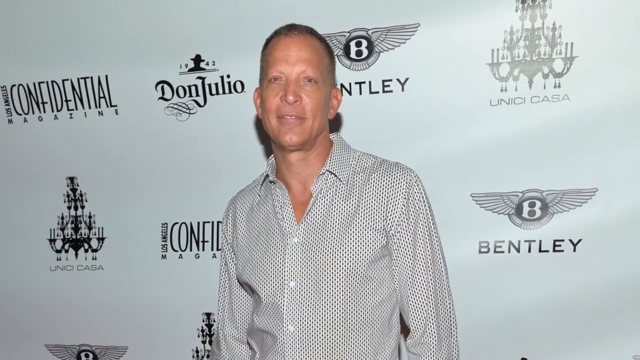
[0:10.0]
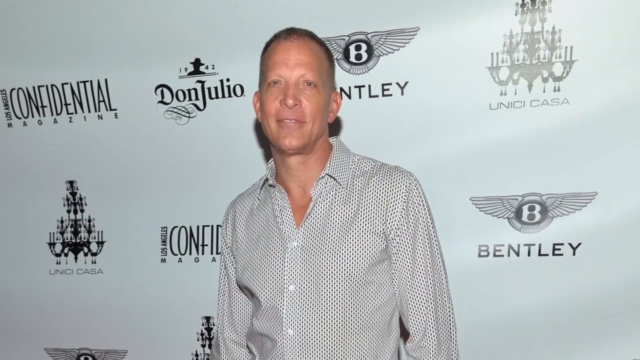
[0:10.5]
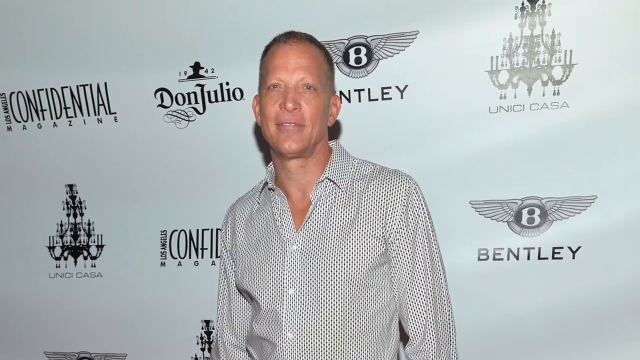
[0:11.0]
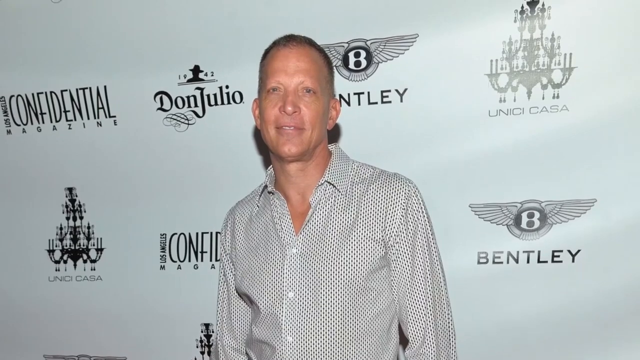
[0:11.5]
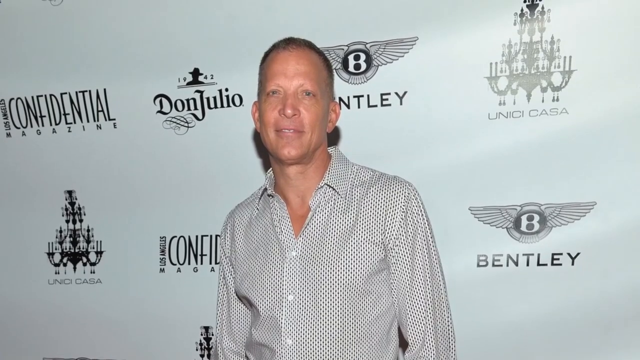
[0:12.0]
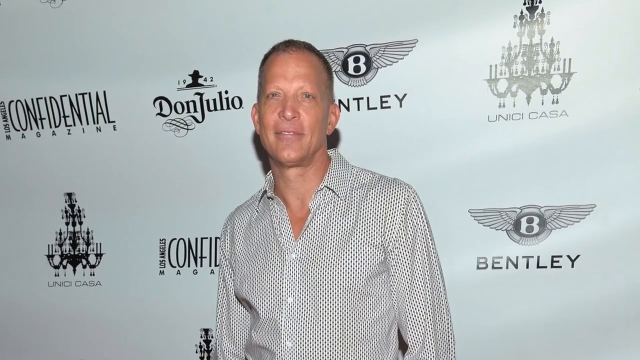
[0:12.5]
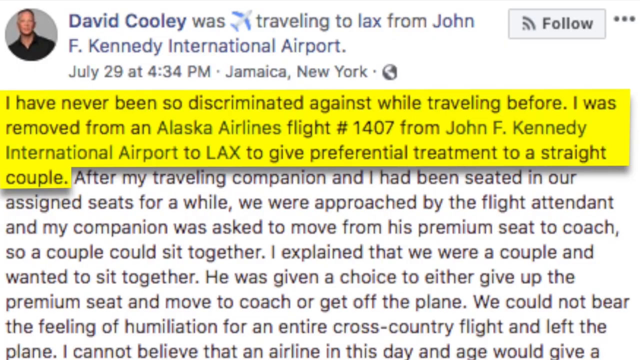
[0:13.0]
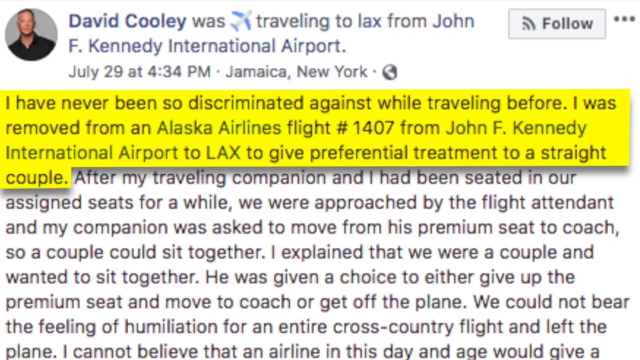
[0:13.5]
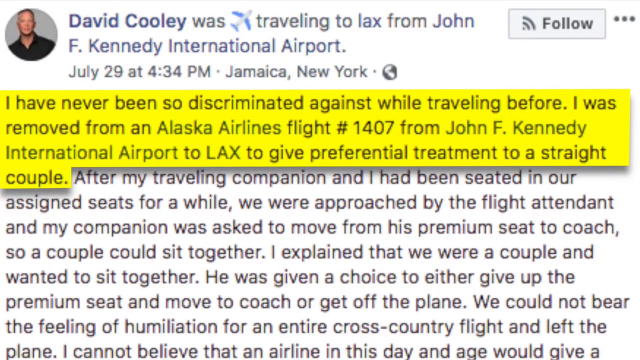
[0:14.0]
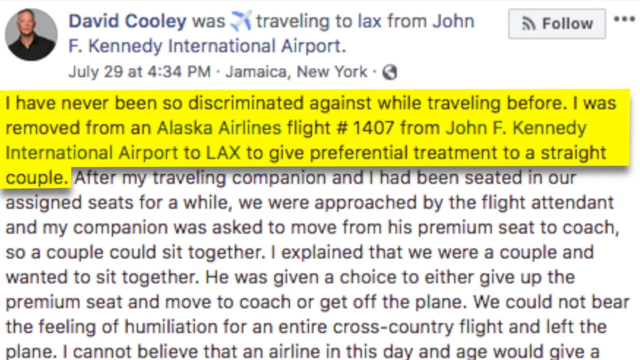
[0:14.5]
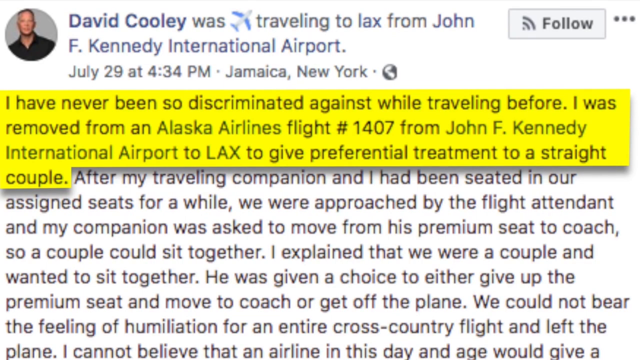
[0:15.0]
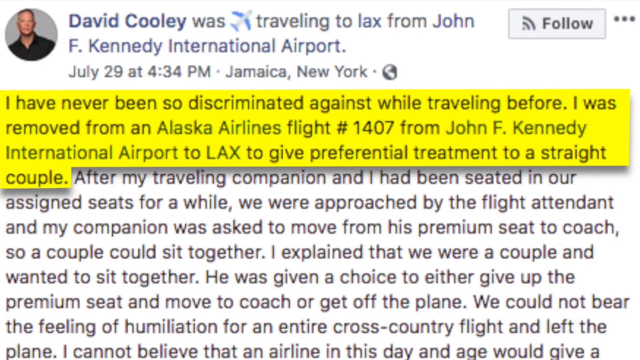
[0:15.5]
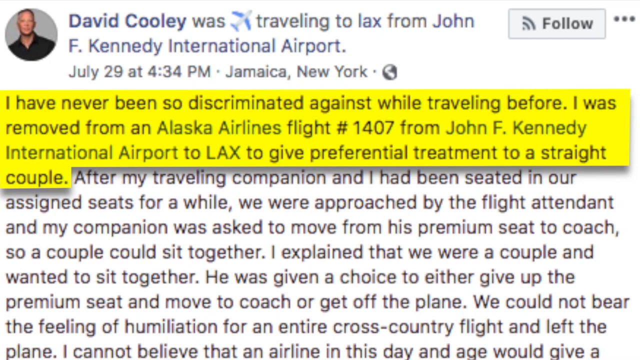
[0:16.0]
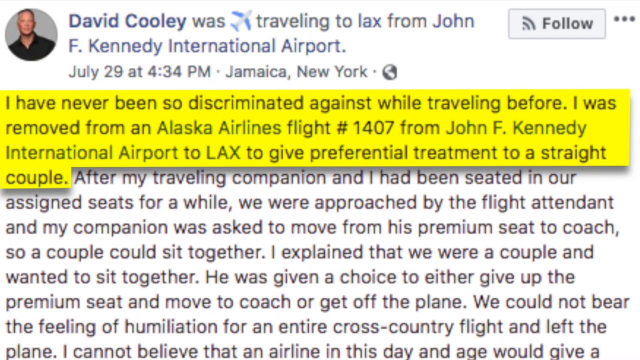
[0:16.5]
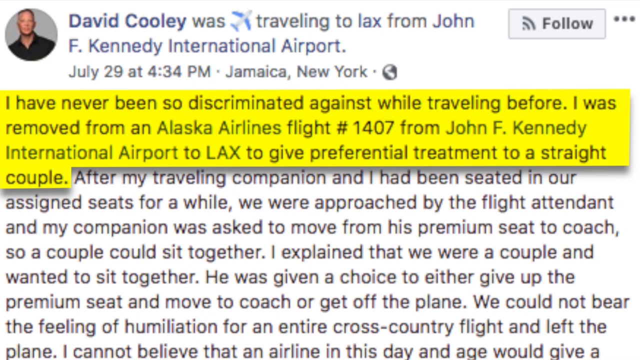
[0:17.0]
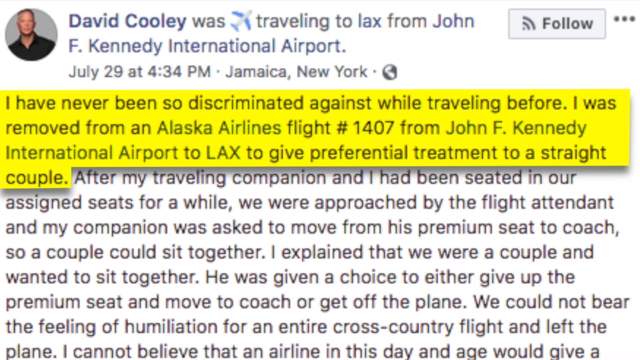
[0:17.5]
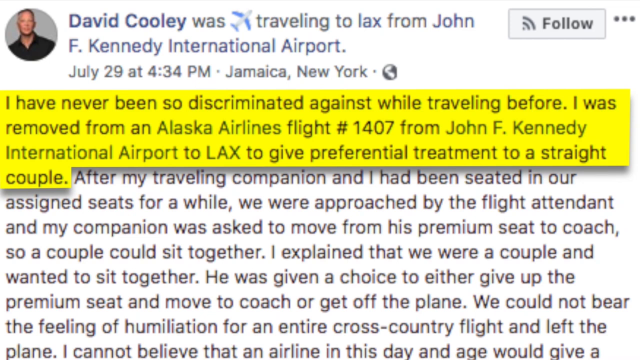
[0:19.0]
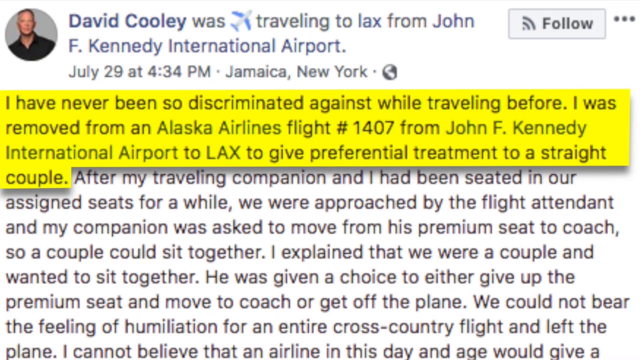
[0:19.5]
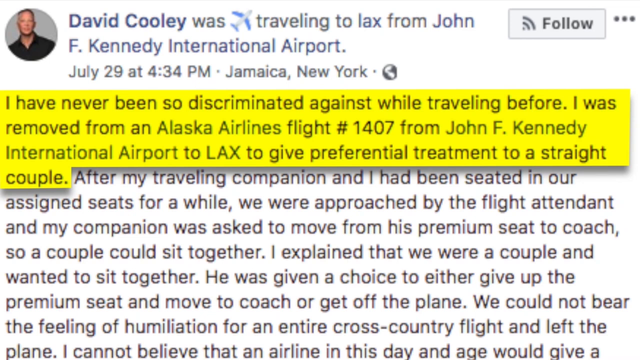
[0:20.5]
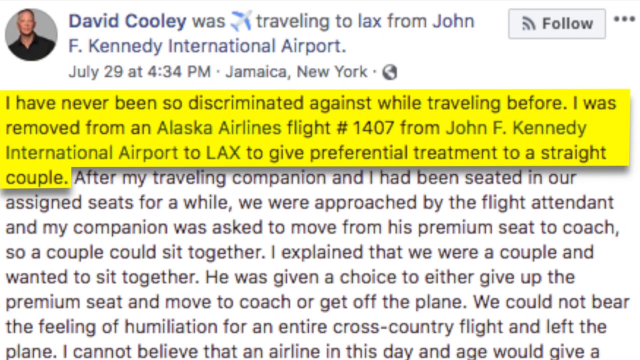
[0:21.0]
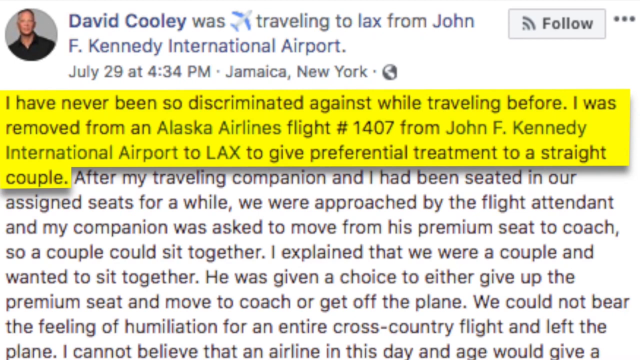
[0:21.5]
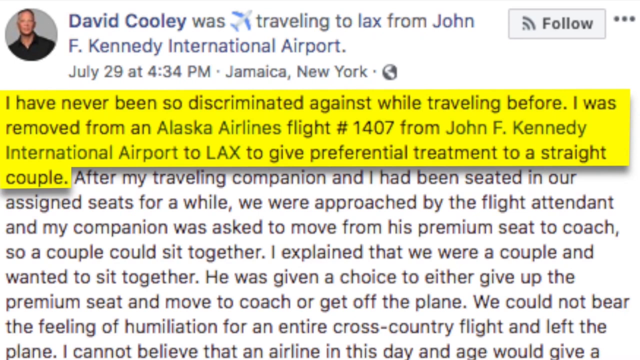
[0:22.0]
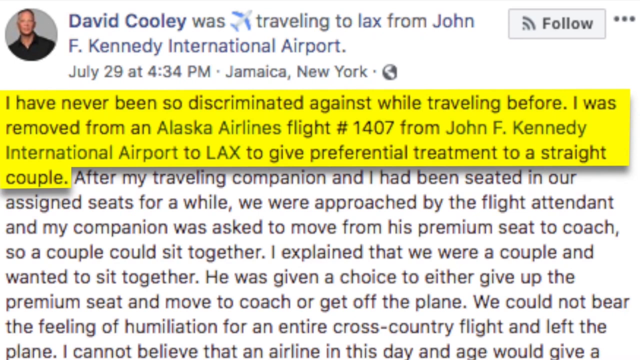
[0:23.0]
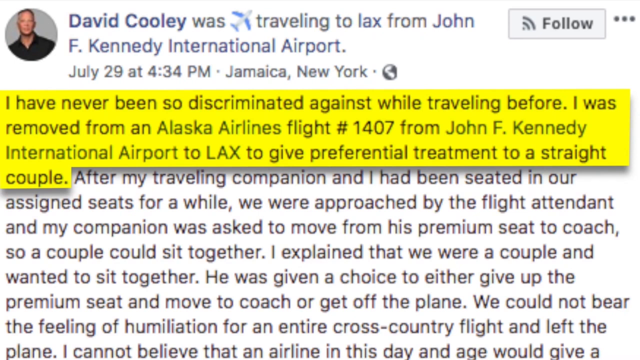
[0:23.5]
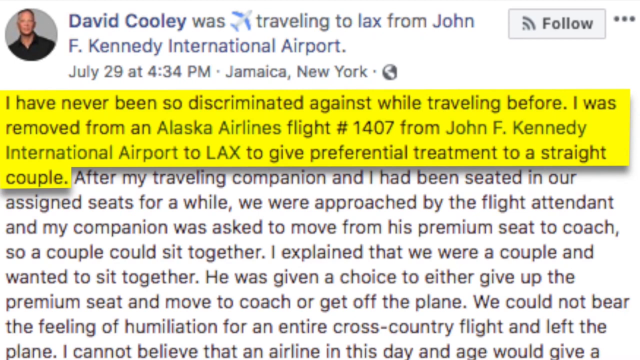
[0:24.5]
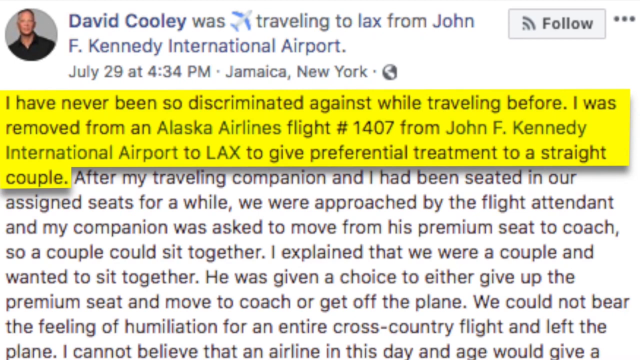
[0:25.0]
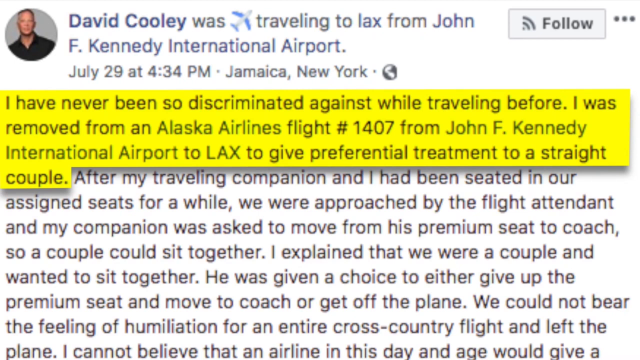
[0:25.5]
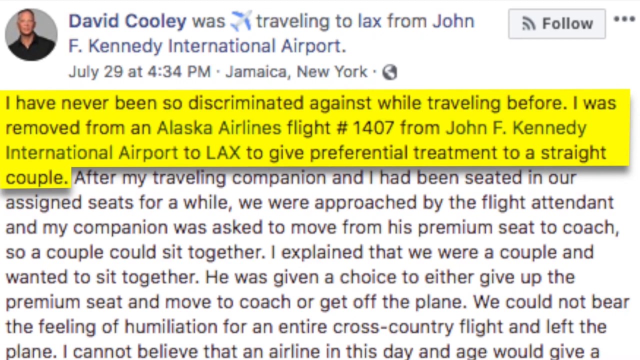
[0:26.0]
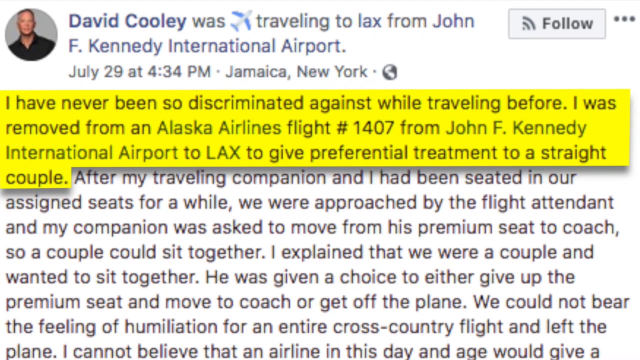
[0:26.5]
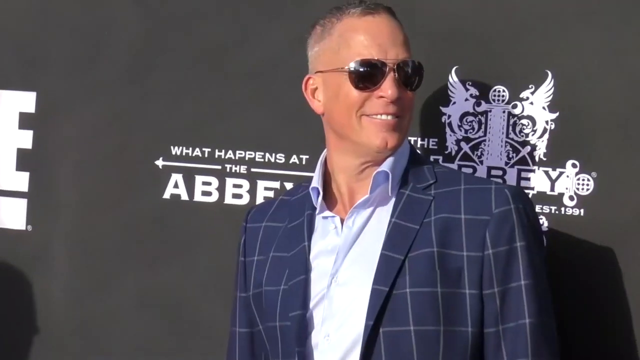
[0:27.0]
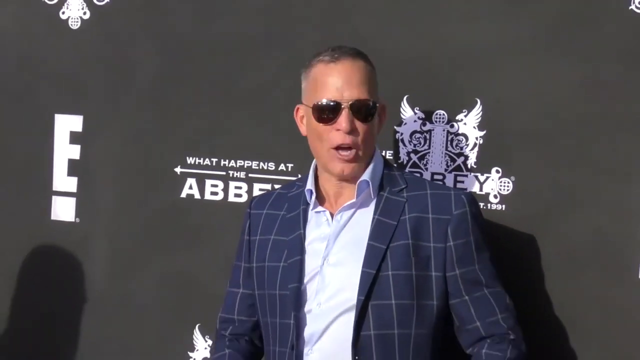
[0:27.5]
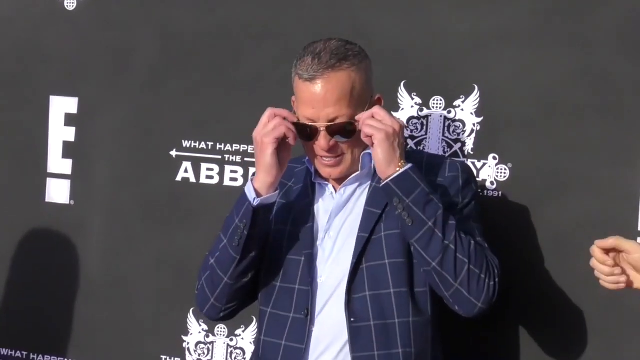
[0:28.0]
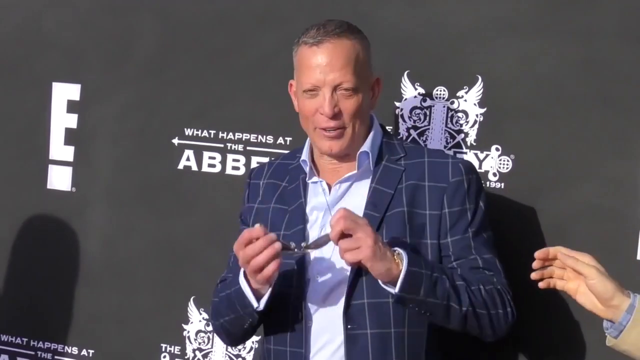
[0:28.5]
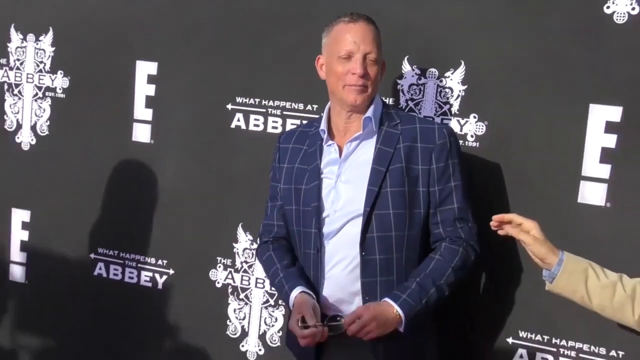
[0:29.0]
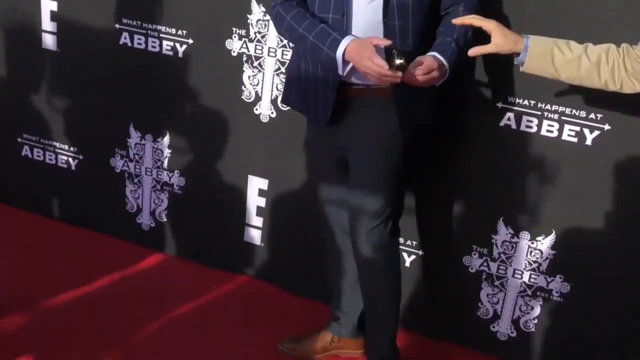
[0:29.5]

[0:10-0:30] A man in a black and white shirt, with short black hair, stands smiling in front of a poster with "confidential" written on it. The scene changes to text saying "David Coloni was traveling to LAX from John F. Kennedy International Airport", and another text in yellow reads "I have never been so discriminated against while traveling before I was removed from an Alaska Airlines flight #1407 from John F. Kennedy International Airport to LAX to give preferential treatment to a straight couple." The text describes how David Coloni was treated during his travel. The scene then changes to a white man in a blue boxed suit and a white shirt, wearing glasses, with short black hair, standing in front of a poster; another person's hand touches him while he is fixing his glasses.